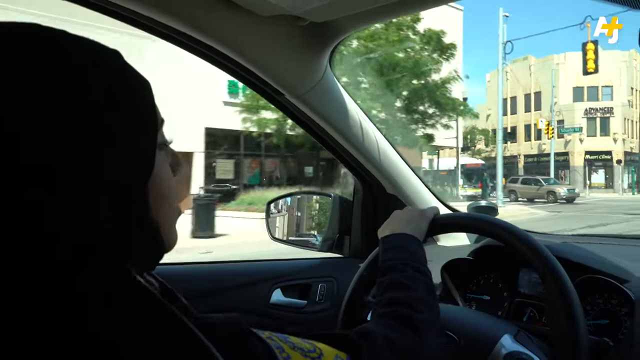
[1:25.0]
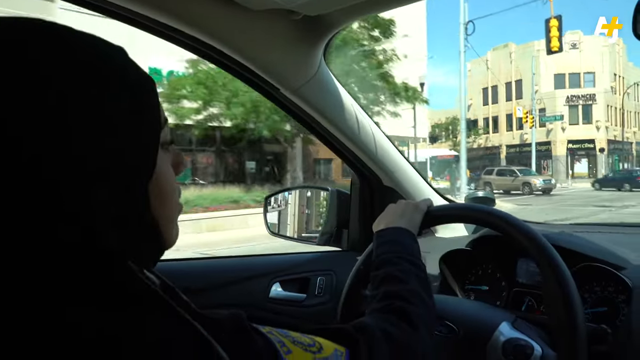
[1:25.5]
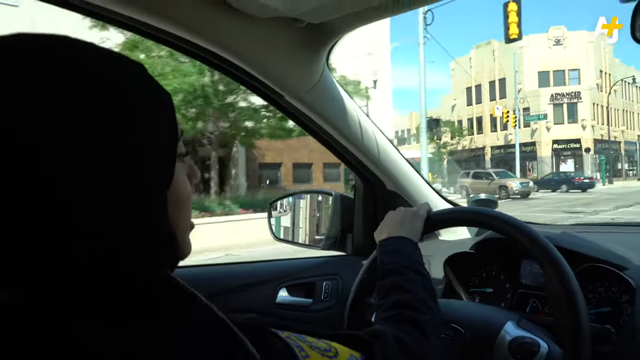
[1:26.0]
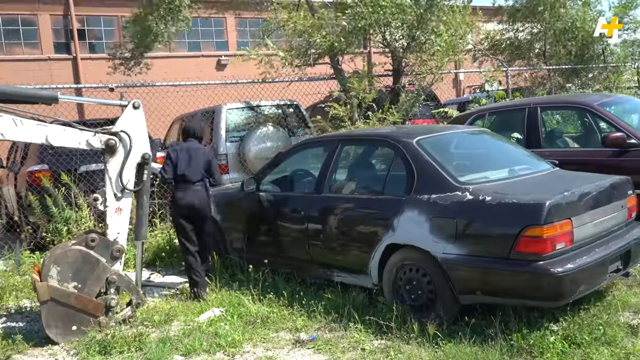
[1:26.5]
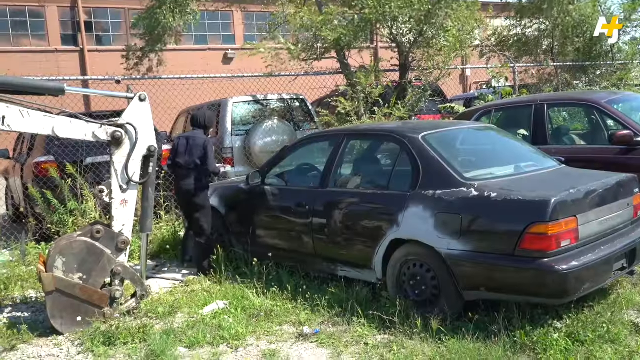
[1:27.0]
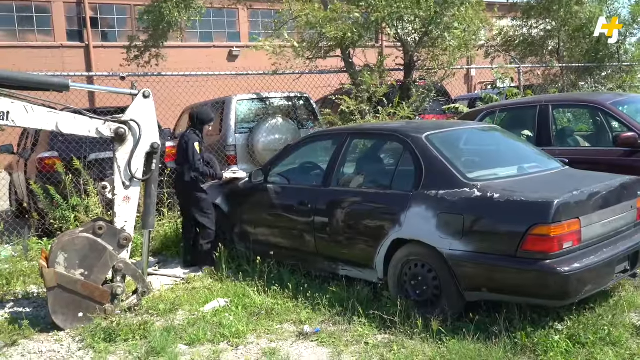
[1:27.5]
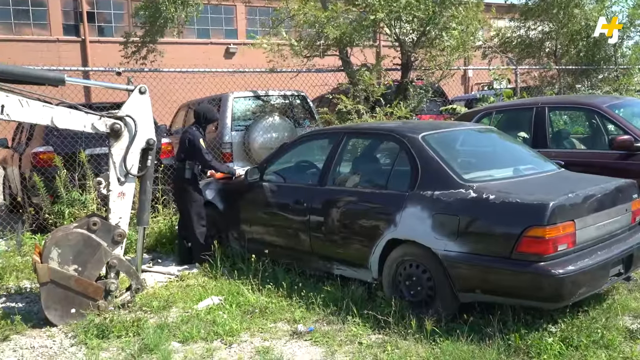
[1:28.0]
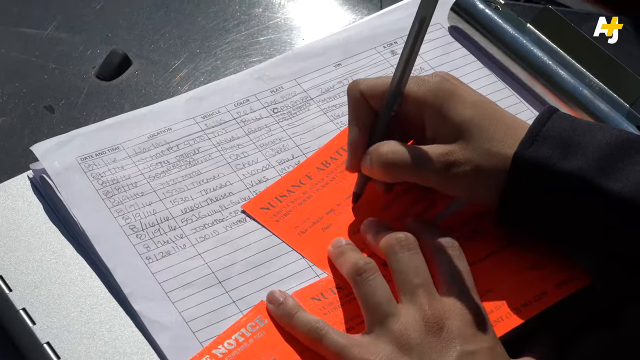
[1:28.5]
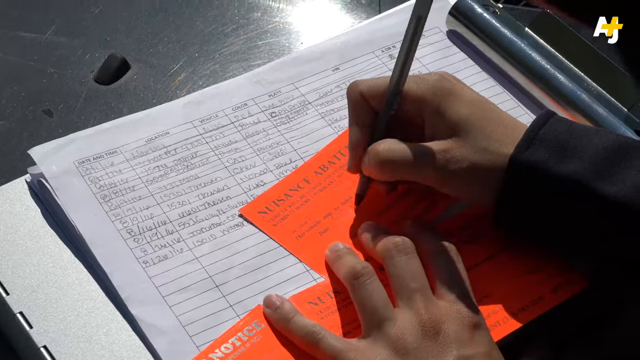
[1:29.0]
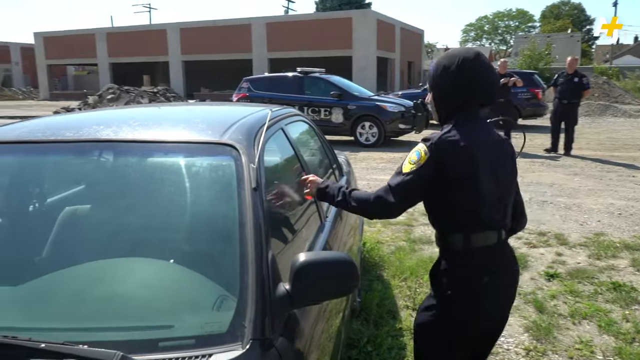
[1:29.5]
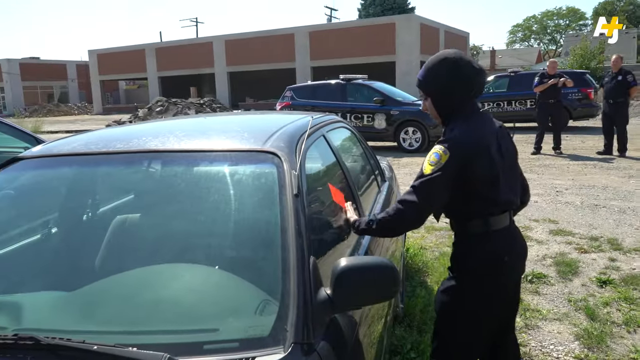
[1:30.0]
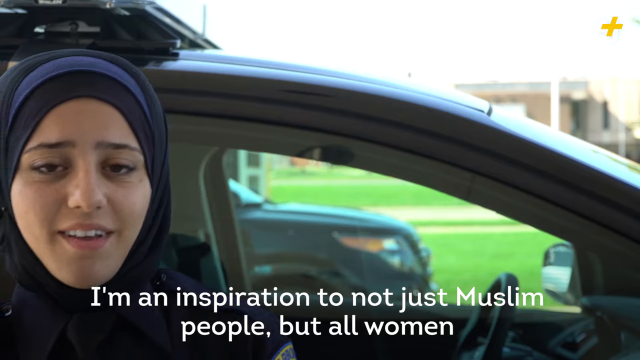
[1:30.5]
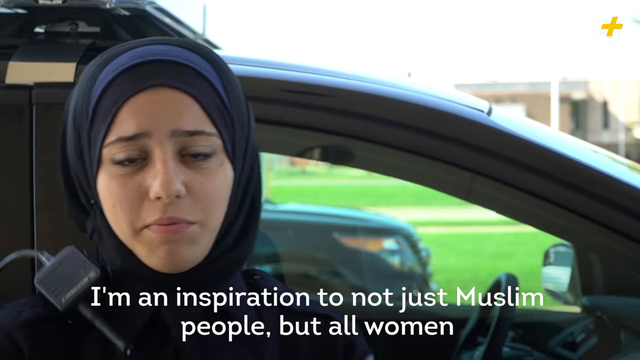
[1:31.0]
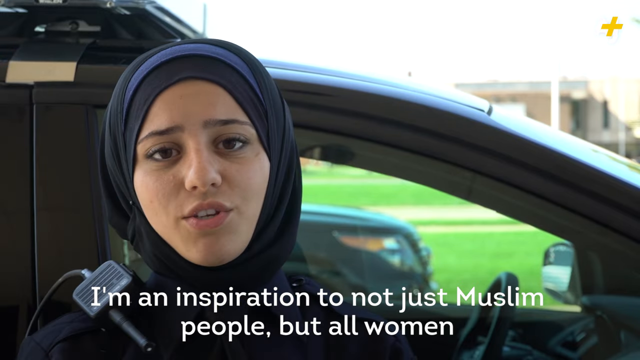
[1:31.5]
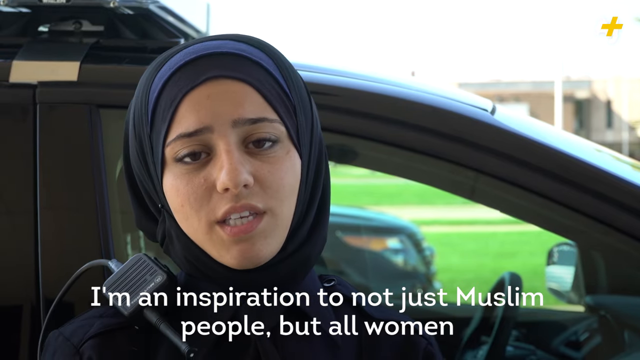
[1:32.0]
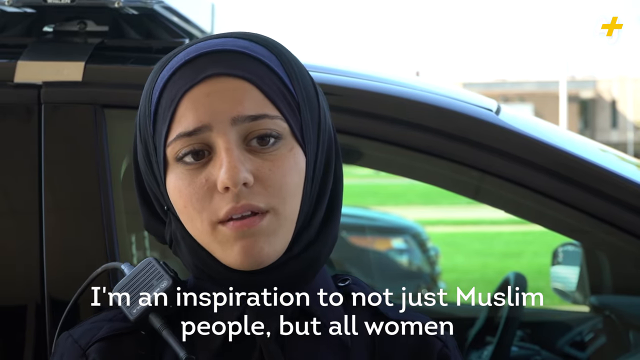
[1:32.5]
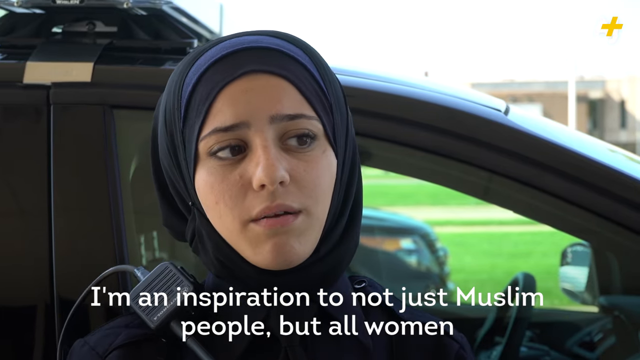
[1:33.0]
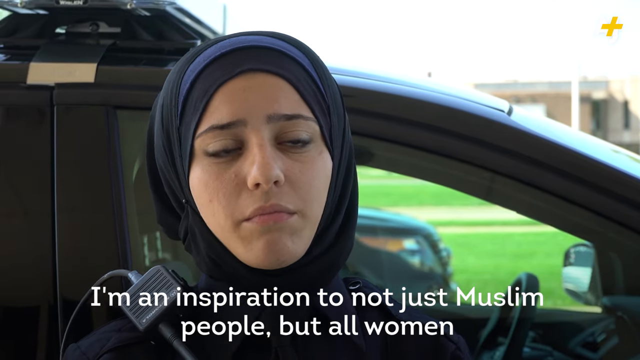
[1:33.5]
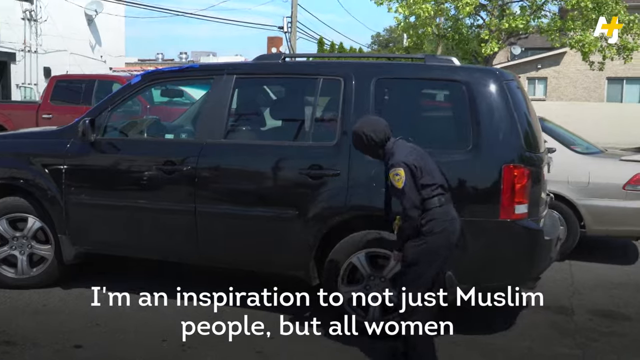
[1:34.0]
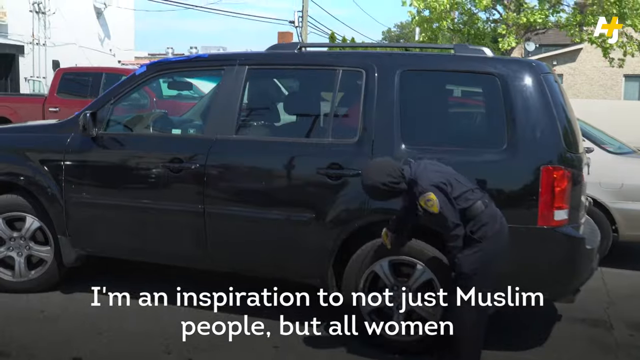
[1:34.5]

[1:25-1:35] She appears to put a parking ticket, warning or impound citation, on orange paper, onto a car, sticking it to the window. About three shots repeat, one of them showing her issuing that citation, with text reading "I'm an inspiration to not just Muslim people, but all women". She walks over to the rear tire of a car and appears to check the wheel, possibly the pressure or the tread. She stands in front of her police car talking to the camera, and she drives her police car down the street while talking.